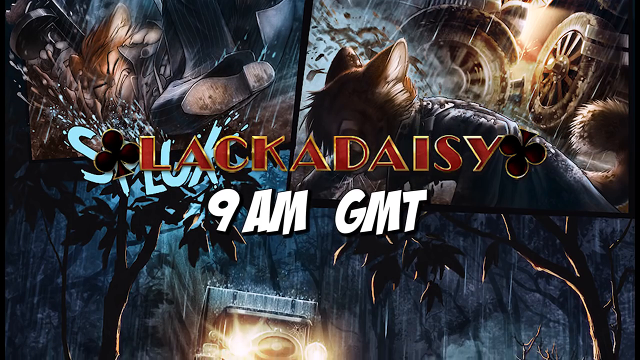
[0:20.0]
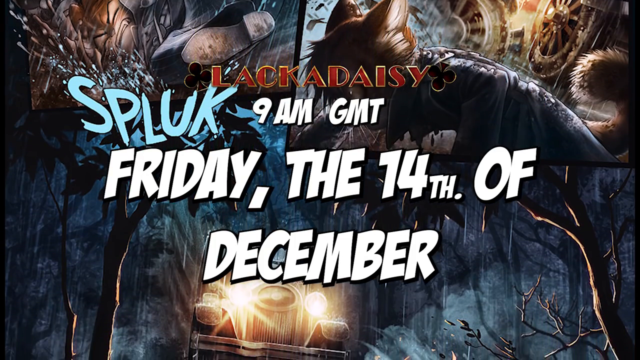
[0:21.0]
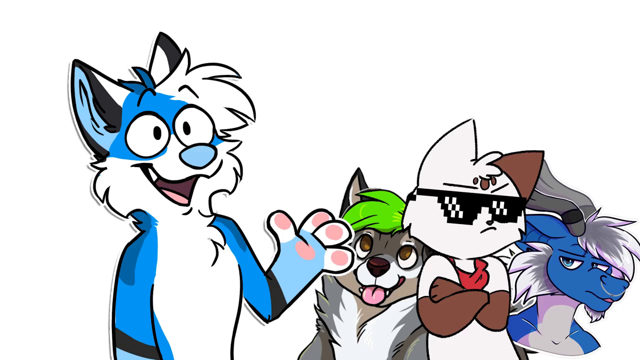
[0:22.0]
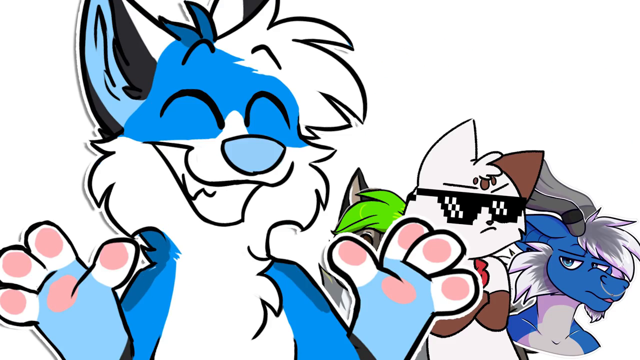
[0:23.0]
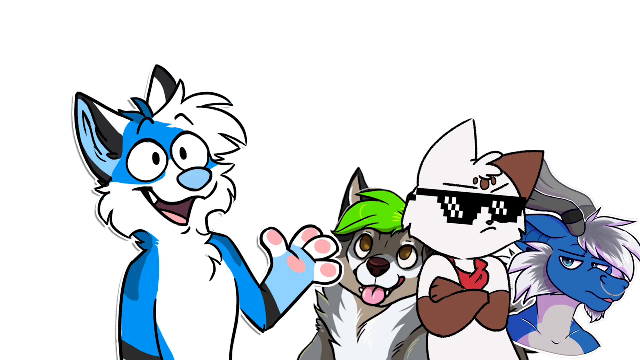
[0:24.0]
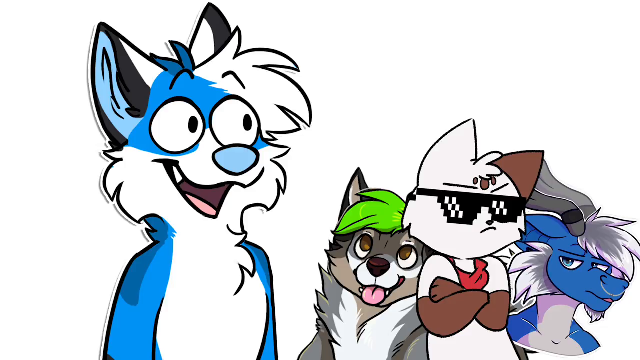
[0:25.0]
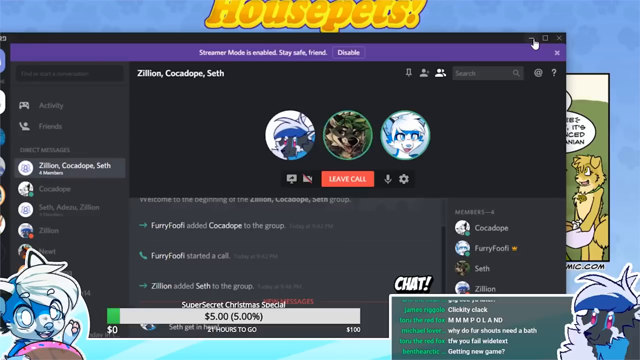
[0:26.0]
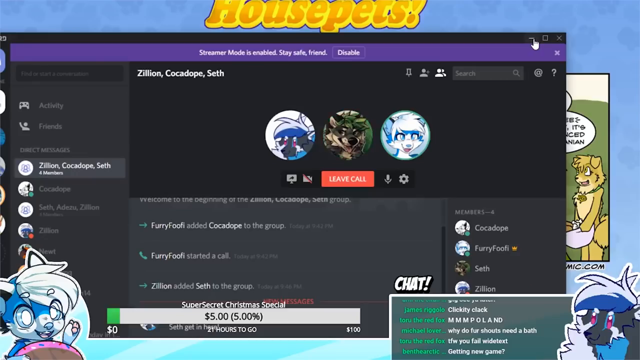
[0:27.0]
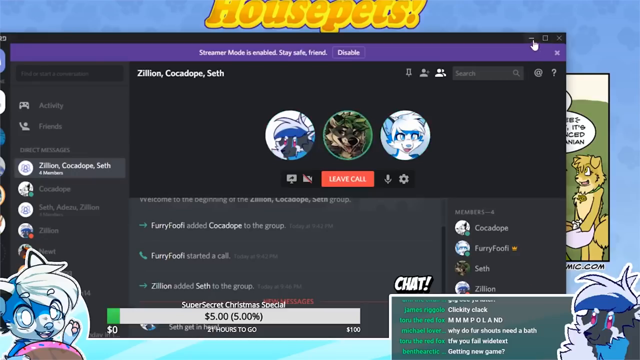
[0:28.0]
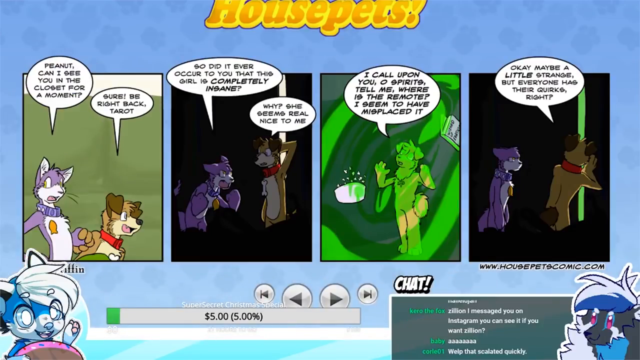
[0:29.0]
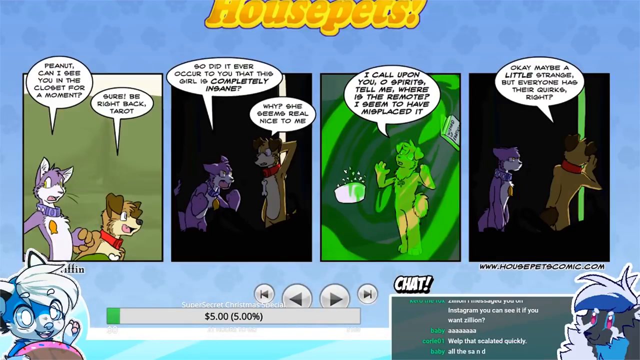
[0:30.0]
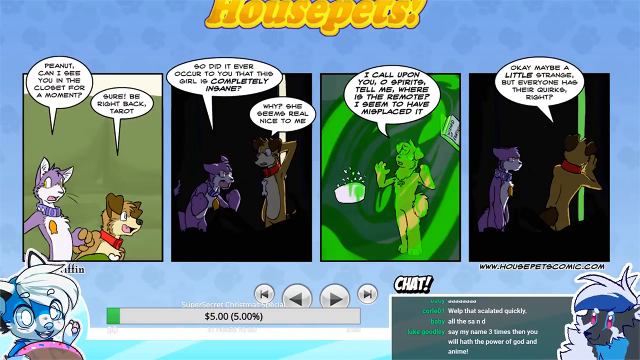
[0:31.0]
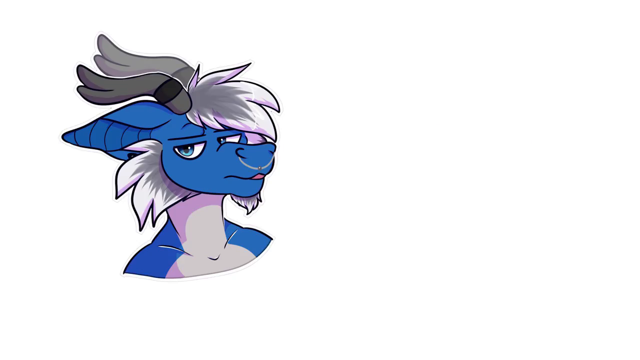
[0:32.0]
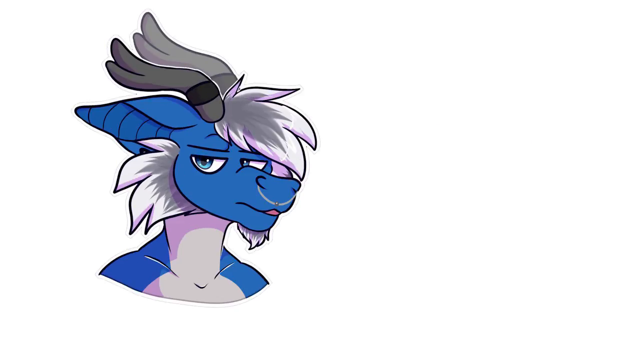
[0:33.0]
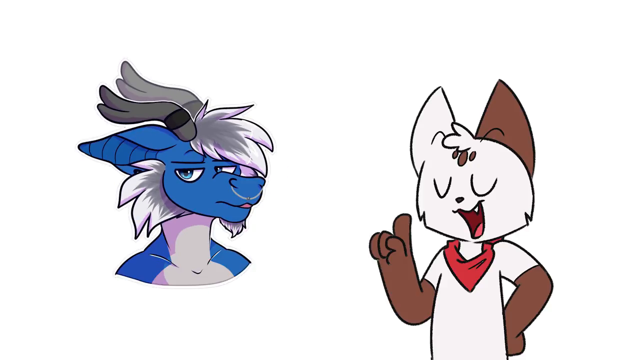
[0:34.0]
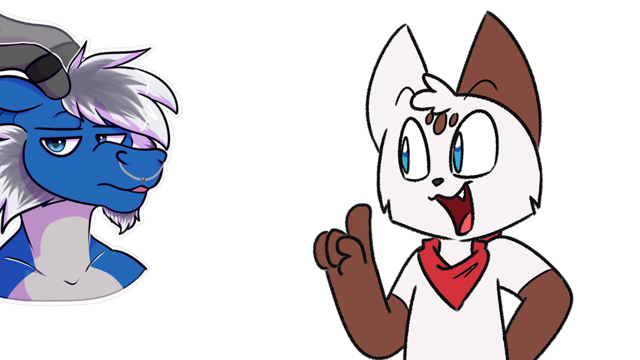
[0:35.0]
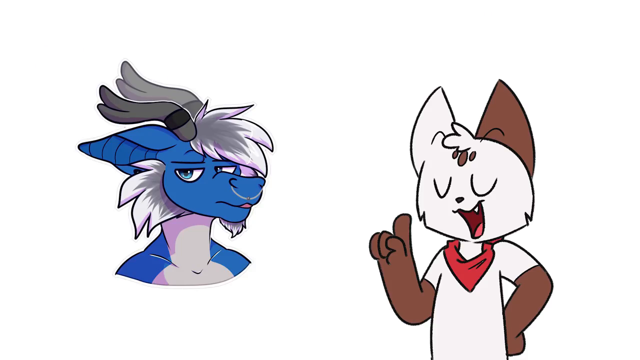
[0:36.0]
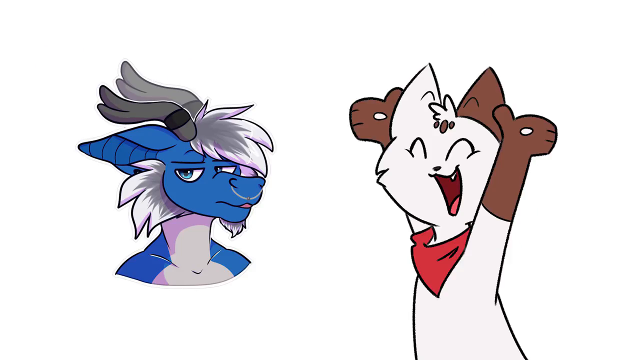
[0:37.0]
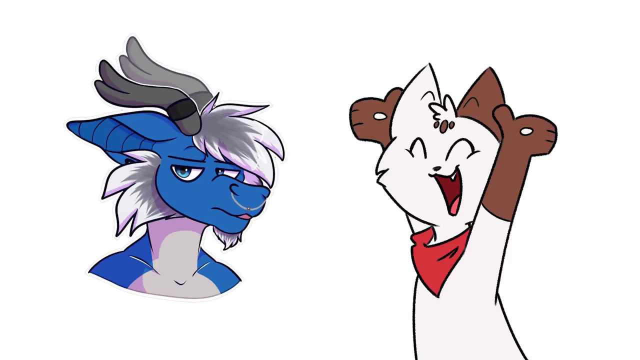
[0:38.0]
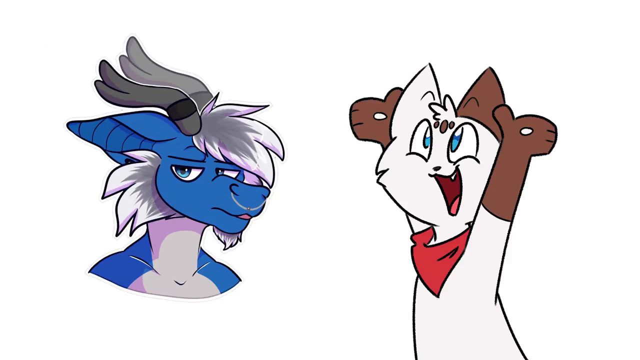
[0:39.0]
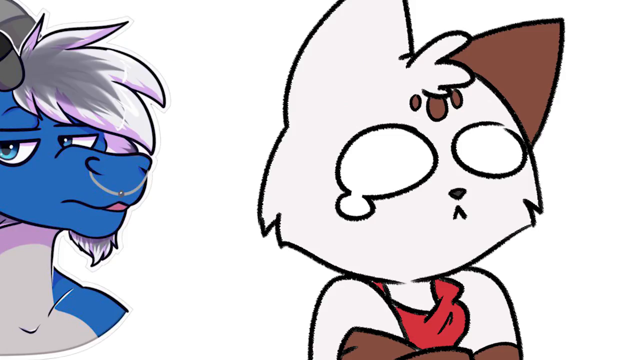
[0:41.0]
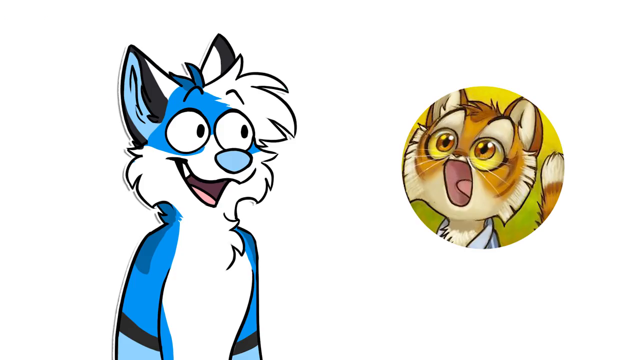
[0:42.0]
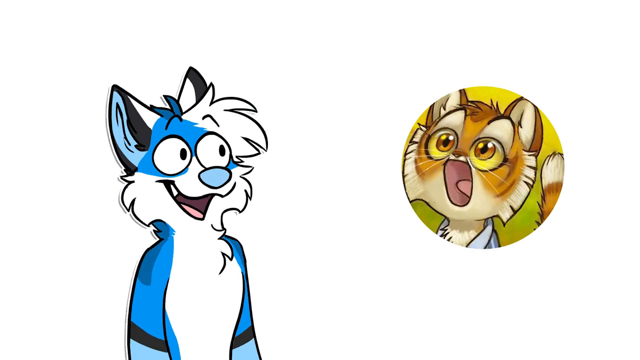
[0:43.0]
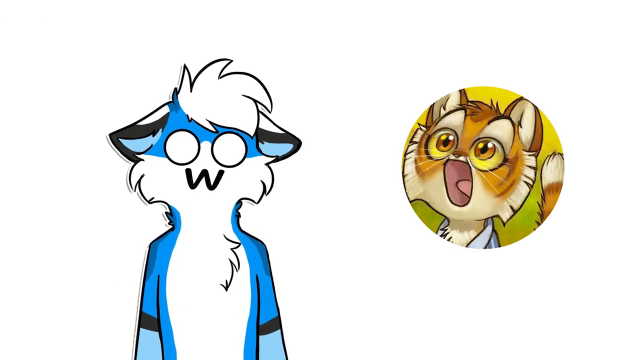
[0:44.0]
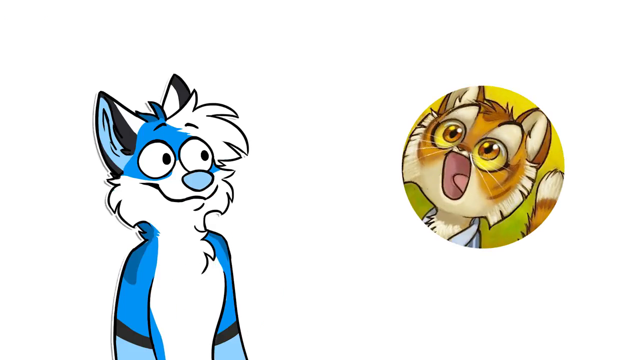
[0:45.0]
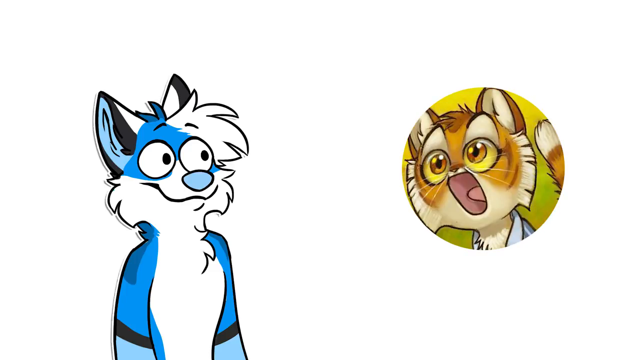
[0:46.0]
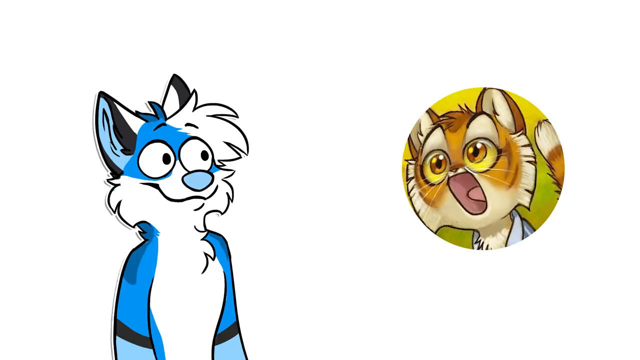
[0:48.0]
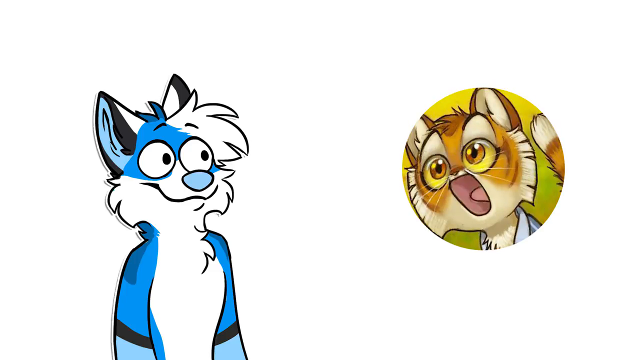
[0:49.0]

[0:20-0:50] A collage of apparently different scenarios involving cats appears. The title "Lackadaisy" in red crosses the screen, with "9AMGMT" underneath it and a spade on each end of the word. In the first scene of the collage a cat is getting hurt; in the second a cat is leaning over. There seems to be rain in all the scenes, and in the bottom one it is raining. The view then pans over to the drawn blue cat from earlier, which seems happy most of the time. Three characters are grouped together on the right-hand side: a cat wearing sunglasses, a goat type of character, and one that looks like a dog. The text "House Pets" appears, and a comic strip is shown. The word "Chat" appears, and the goat character and the cat character are on the screen, with the cat character holding its hands up. The view pans back to the blue cat, and the cat character is interacting with an icon.